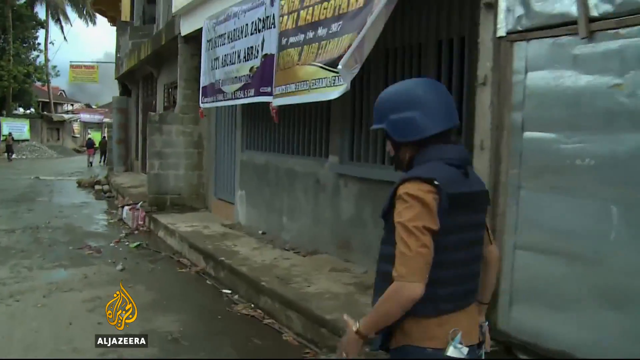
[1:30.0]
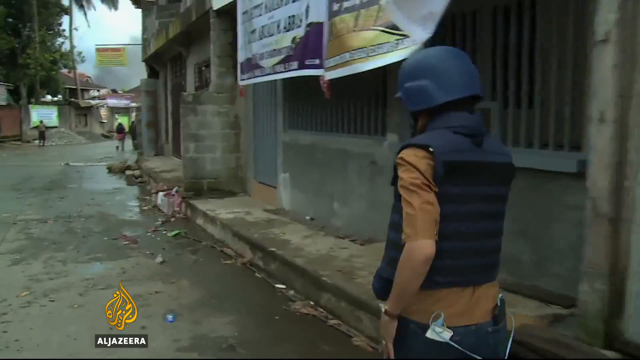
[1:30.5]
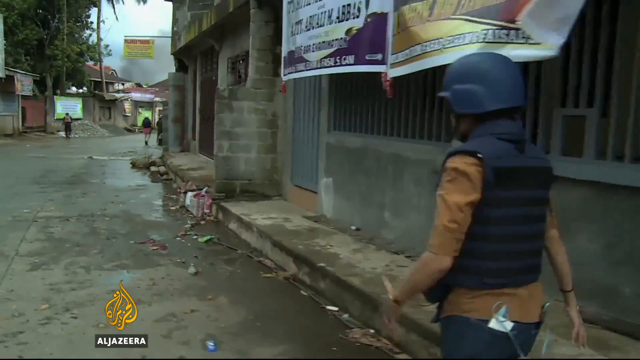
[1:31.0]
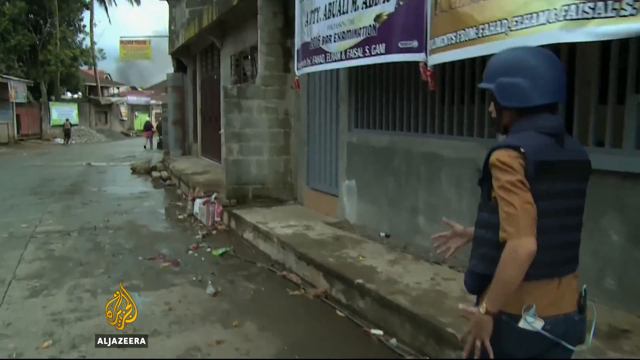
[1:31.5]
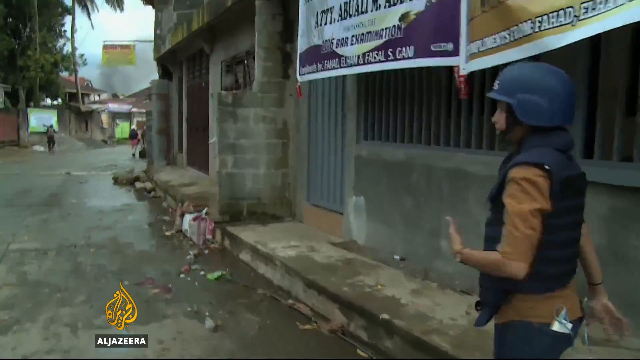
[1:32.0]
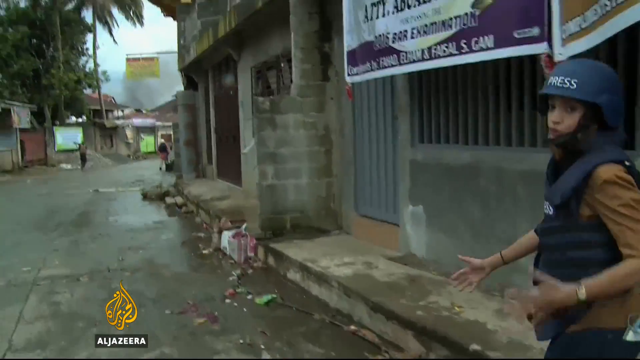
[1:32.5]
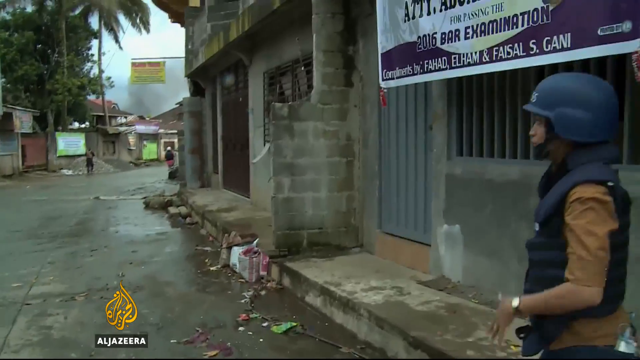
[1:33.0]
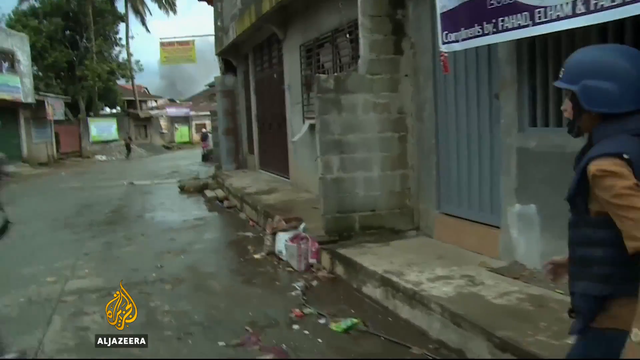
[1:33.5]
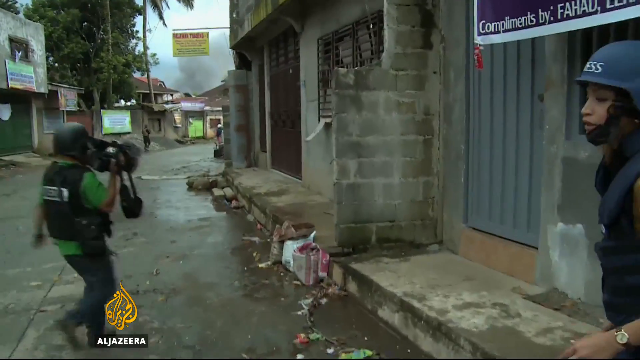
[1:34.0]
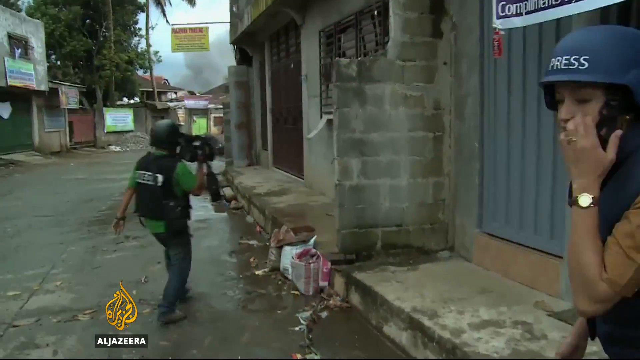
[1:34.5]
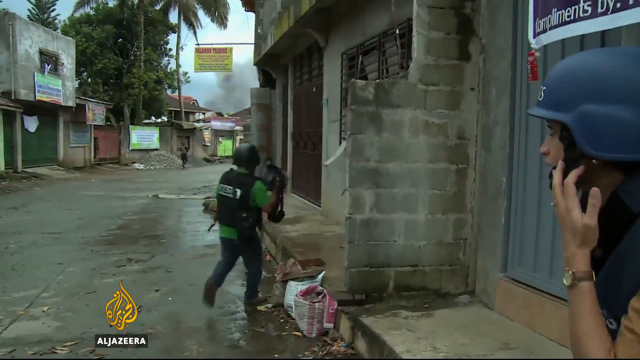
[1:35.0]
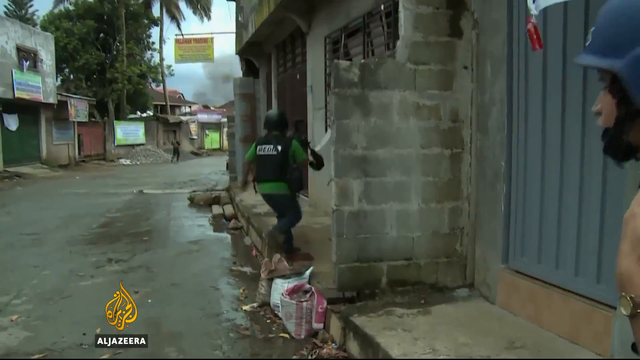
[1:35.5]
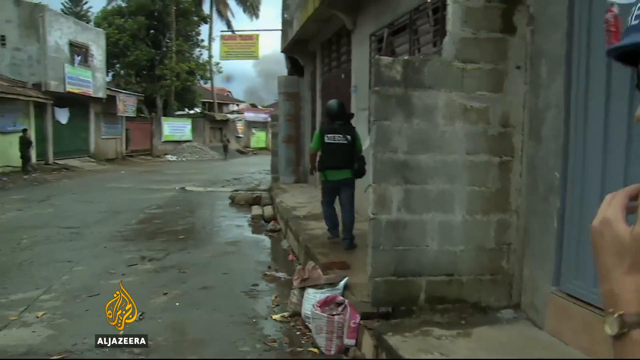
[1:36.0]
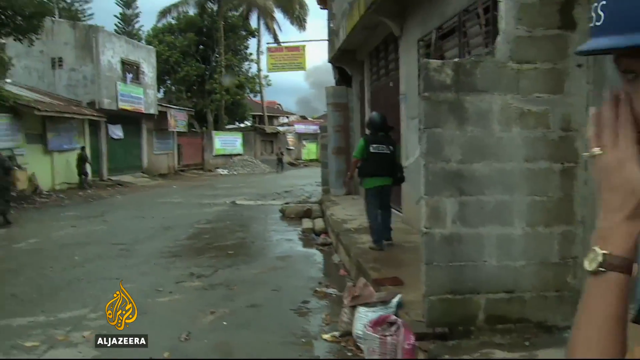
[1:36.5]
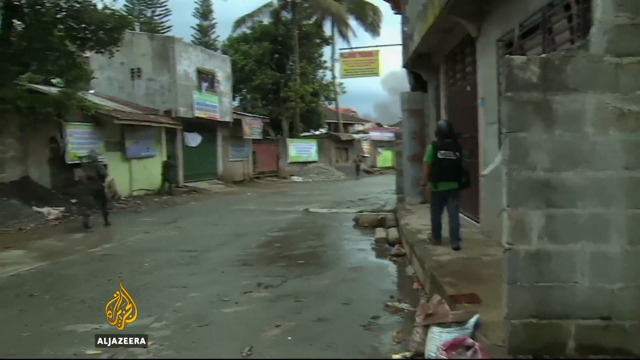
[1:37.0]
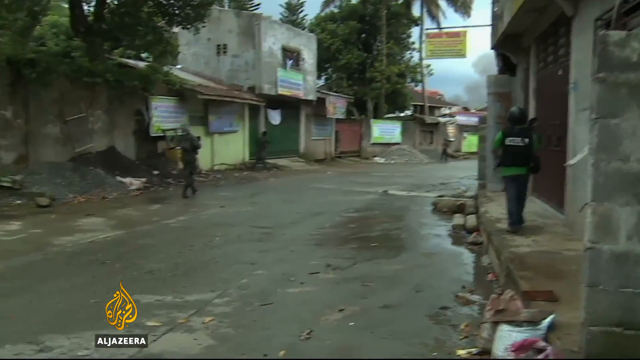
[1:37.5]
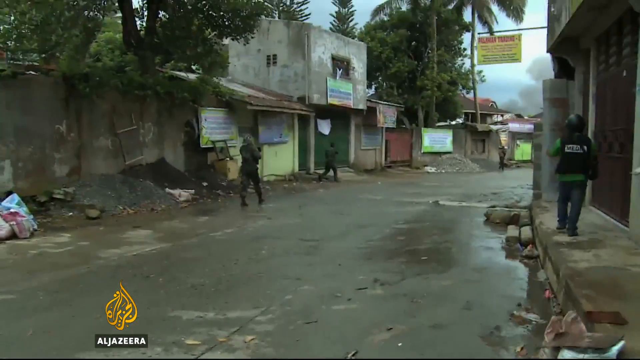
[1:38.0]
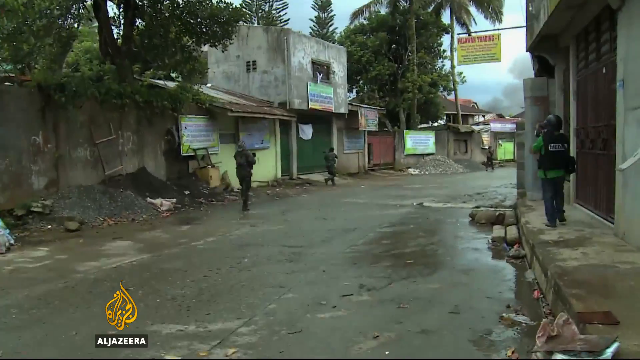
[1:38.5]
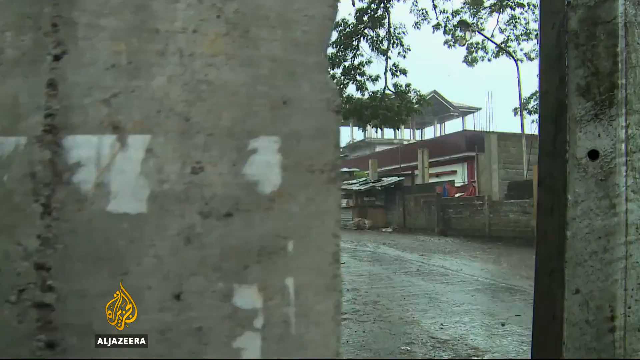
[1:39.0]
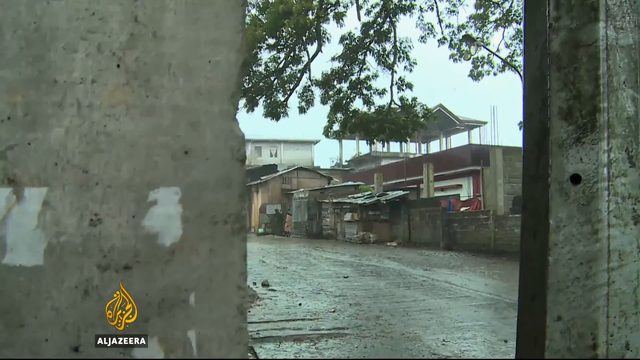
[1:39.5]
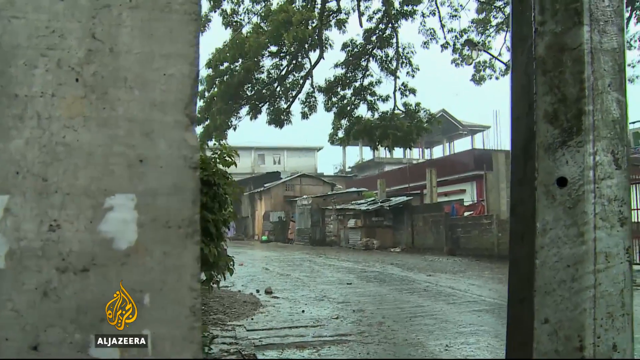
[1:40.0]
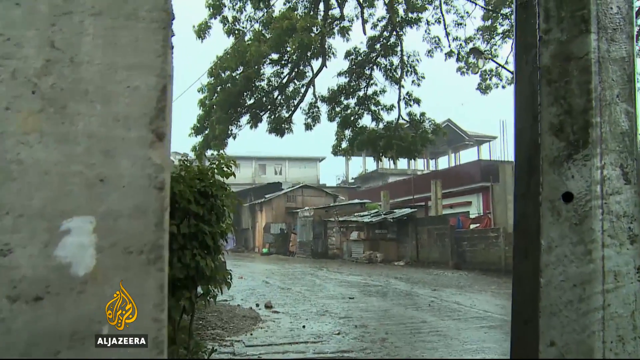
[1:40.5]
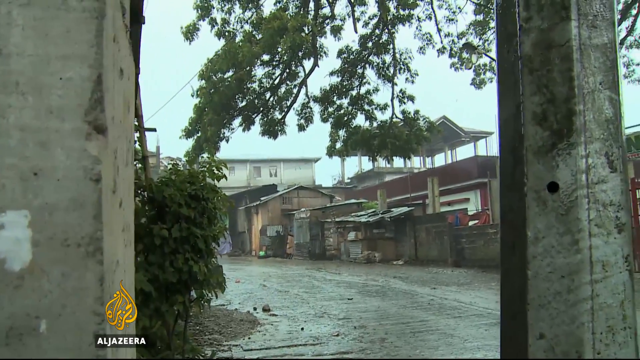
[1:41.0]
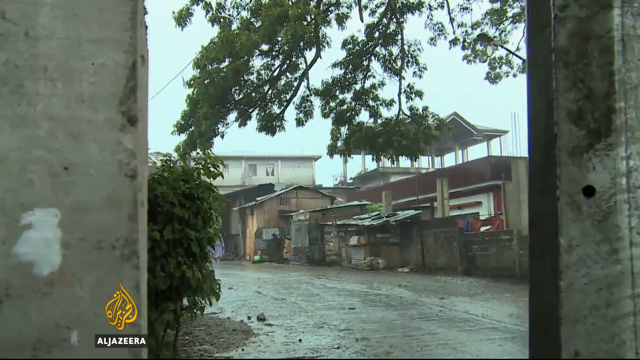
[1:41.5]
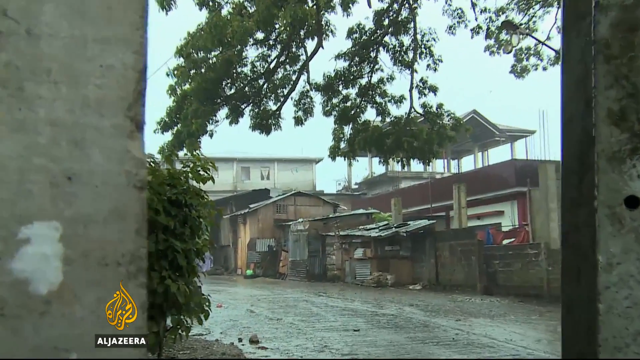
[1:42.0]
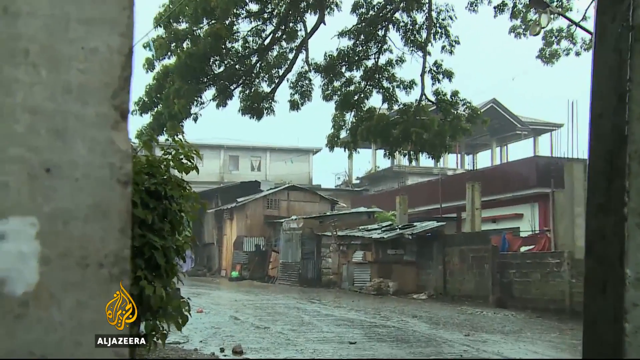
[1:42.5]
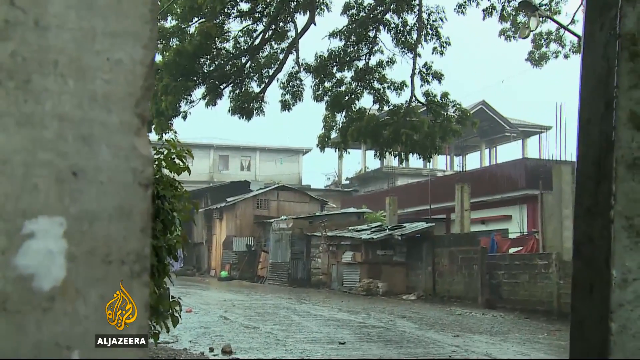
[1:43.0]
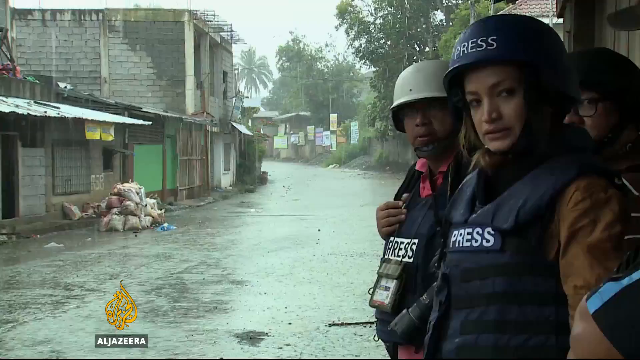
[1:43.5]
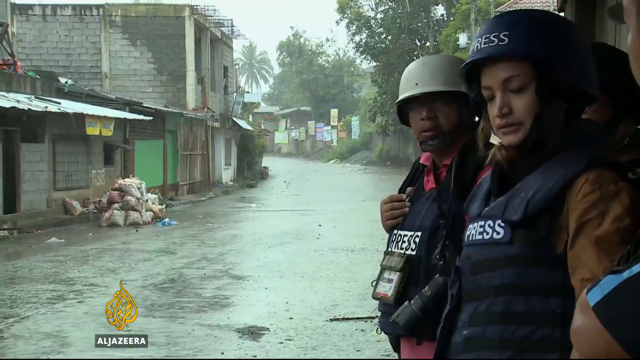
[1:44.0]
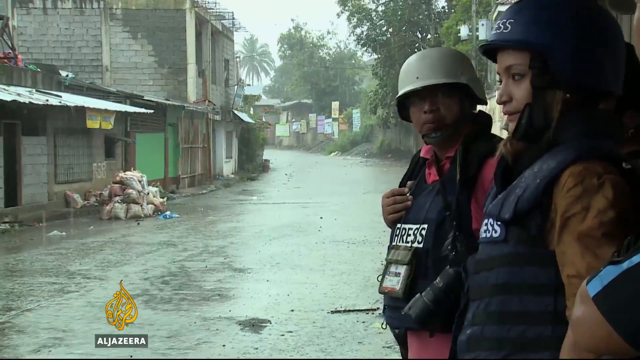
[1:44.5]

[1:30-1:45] As the reporter continues down the street, a cameraman runs out ahead, presumably to get a different angle. The new angle shows another street with rain coming down and nobody in view. The crew is then seen huddled under an awning to stay dry. There appears to be another man, possibly the segment's producer, in a press jacket and a white helmet; the reporter's helmet is black.